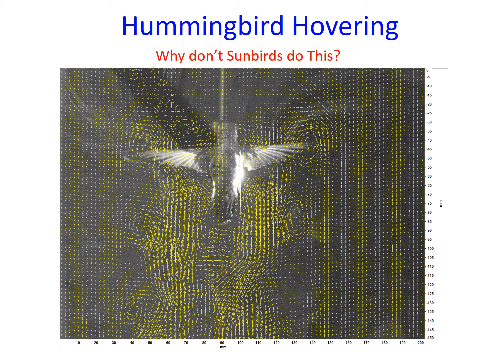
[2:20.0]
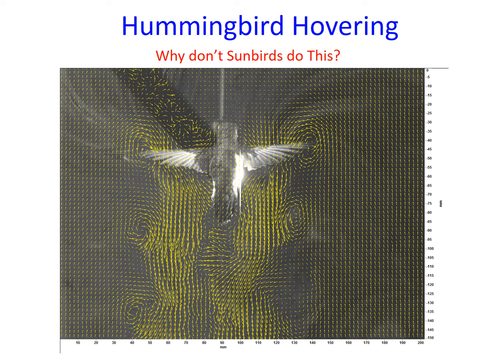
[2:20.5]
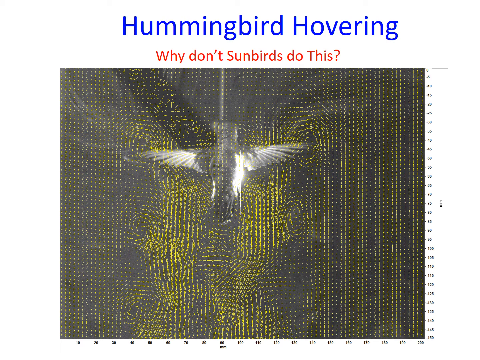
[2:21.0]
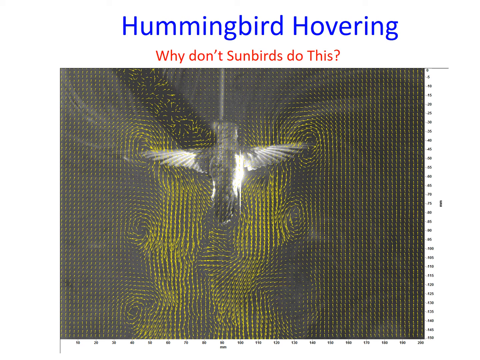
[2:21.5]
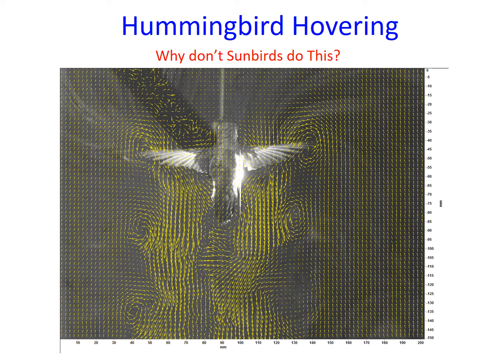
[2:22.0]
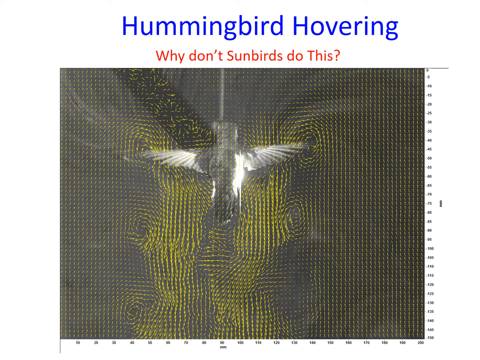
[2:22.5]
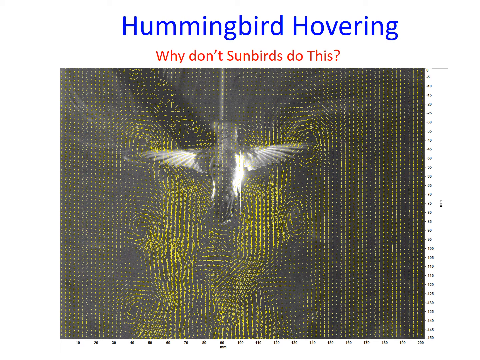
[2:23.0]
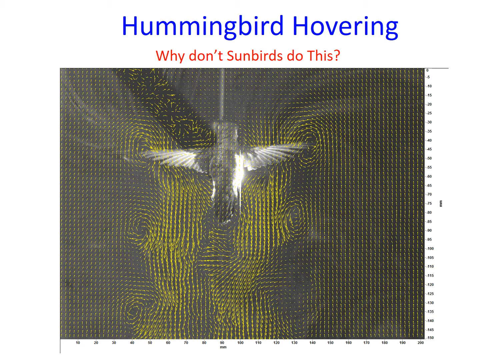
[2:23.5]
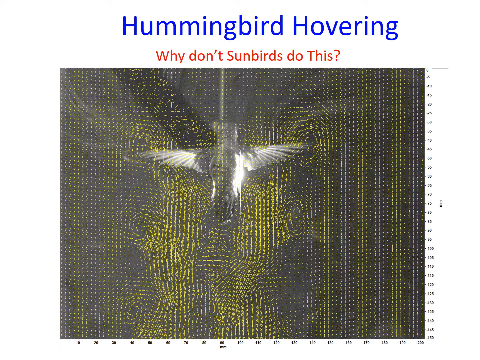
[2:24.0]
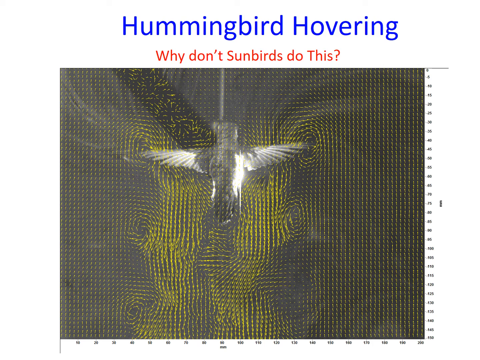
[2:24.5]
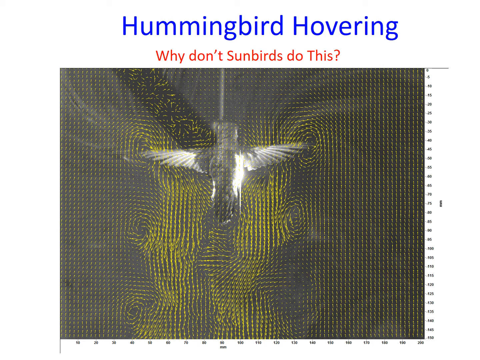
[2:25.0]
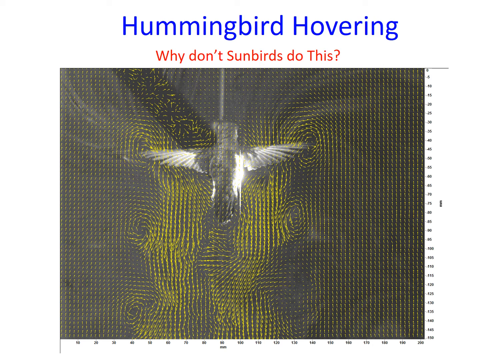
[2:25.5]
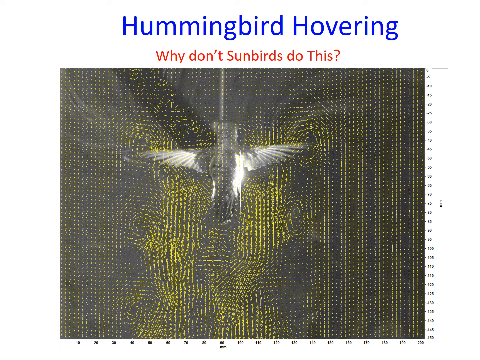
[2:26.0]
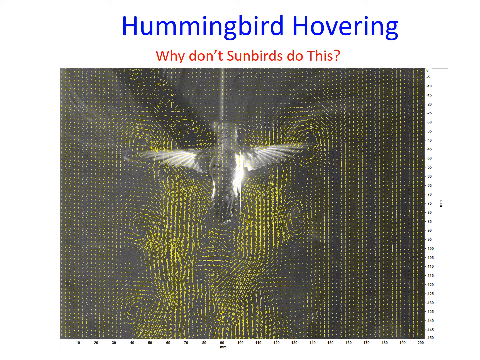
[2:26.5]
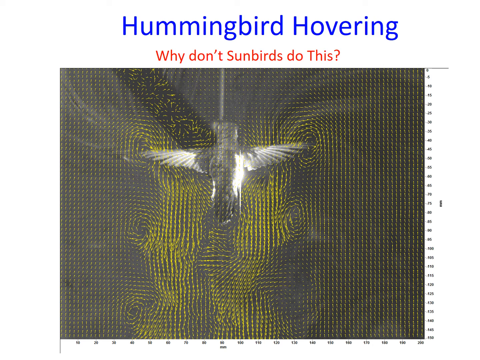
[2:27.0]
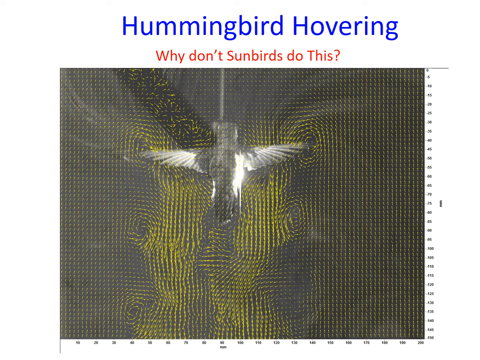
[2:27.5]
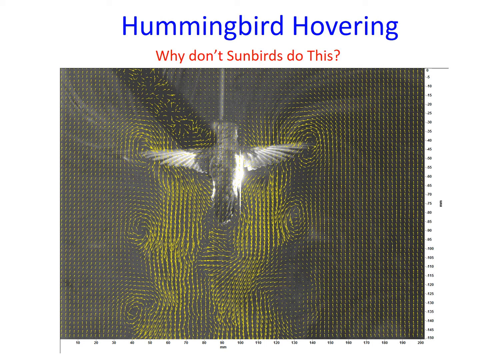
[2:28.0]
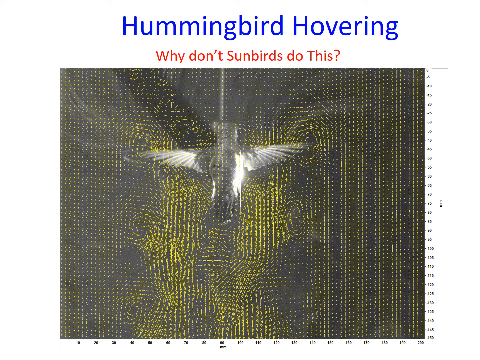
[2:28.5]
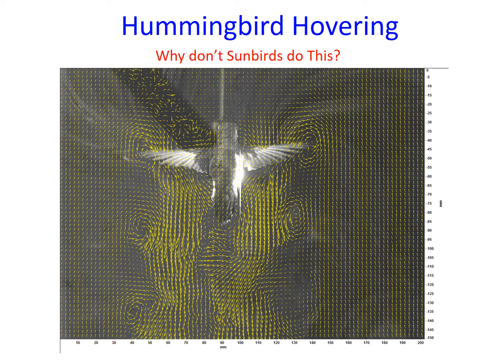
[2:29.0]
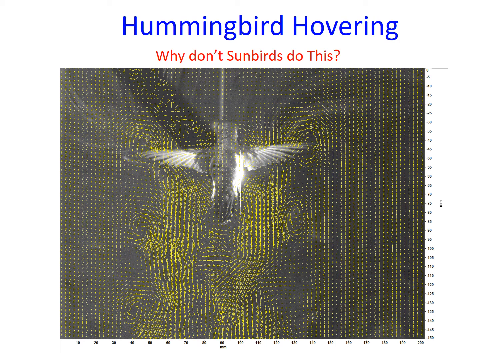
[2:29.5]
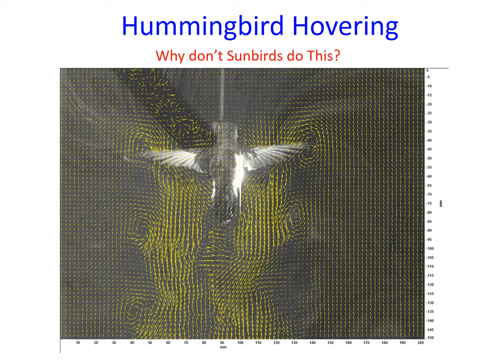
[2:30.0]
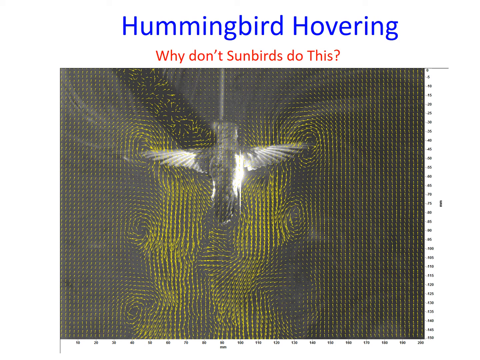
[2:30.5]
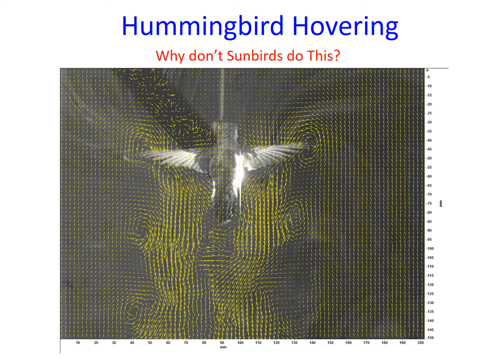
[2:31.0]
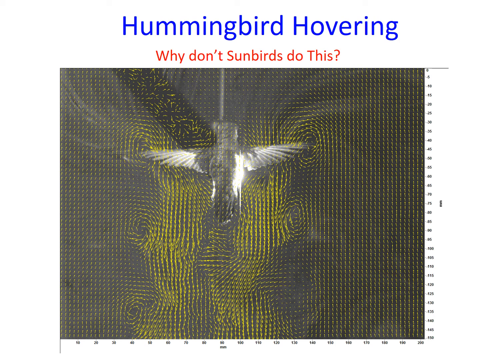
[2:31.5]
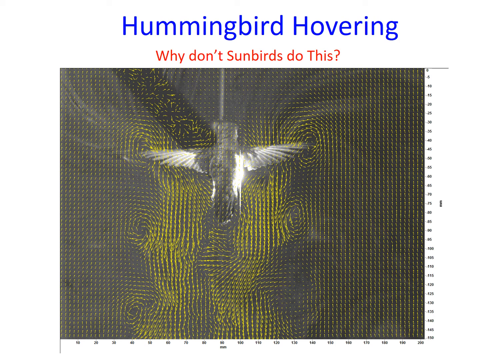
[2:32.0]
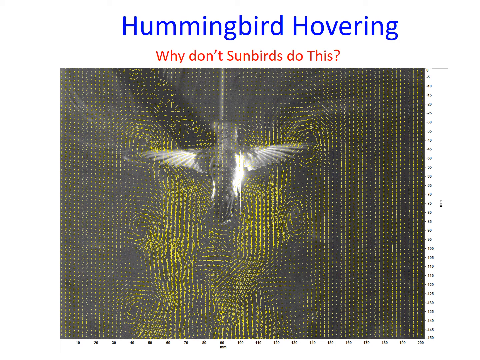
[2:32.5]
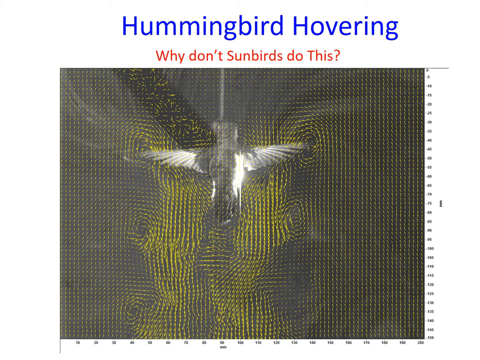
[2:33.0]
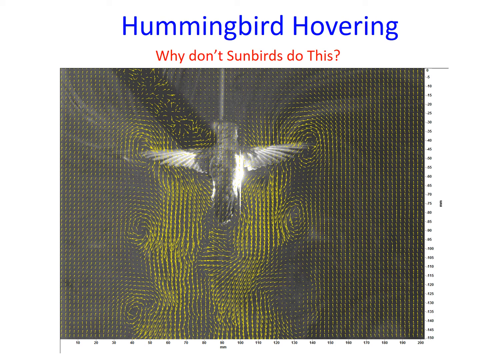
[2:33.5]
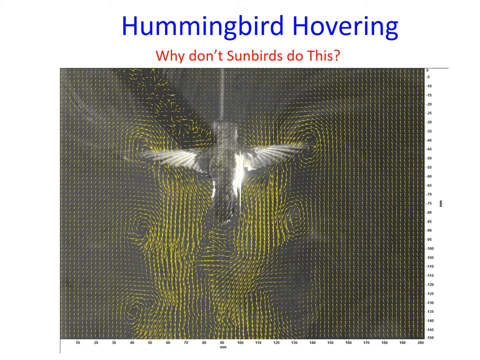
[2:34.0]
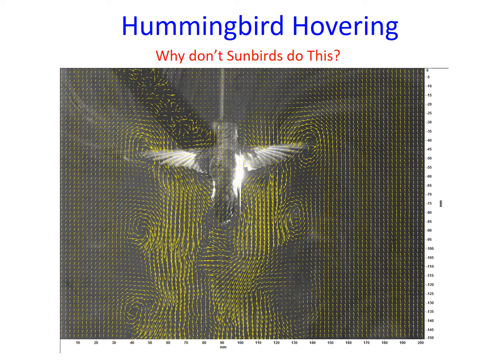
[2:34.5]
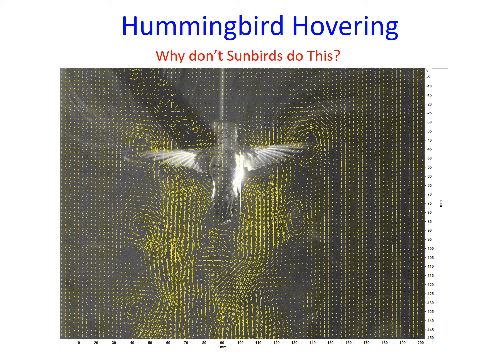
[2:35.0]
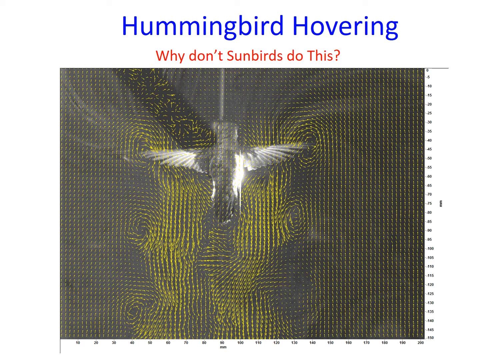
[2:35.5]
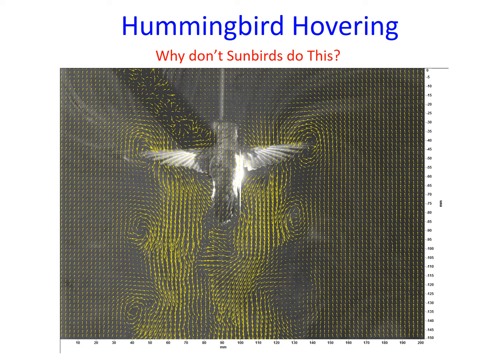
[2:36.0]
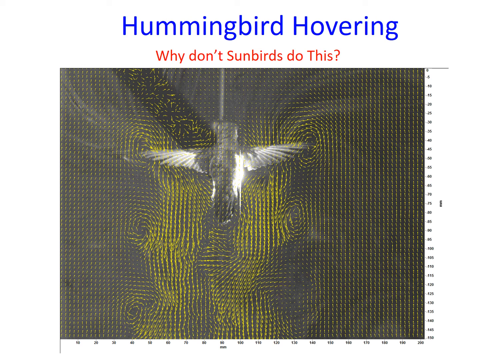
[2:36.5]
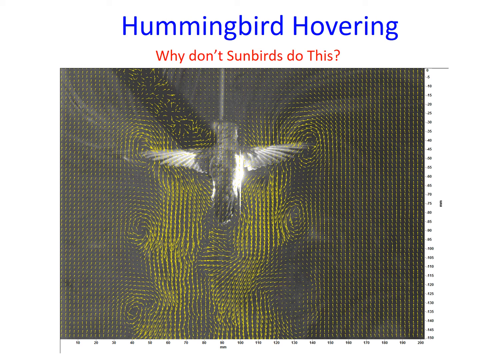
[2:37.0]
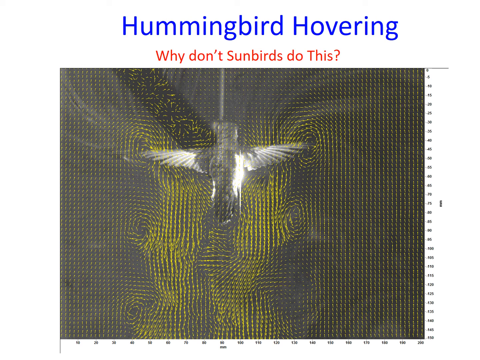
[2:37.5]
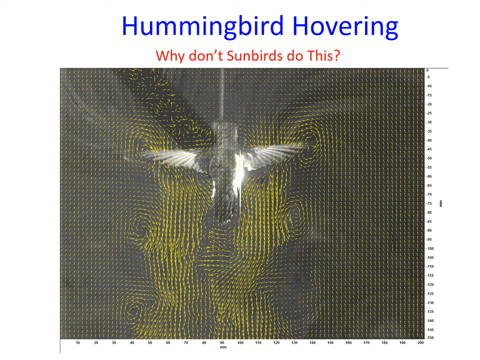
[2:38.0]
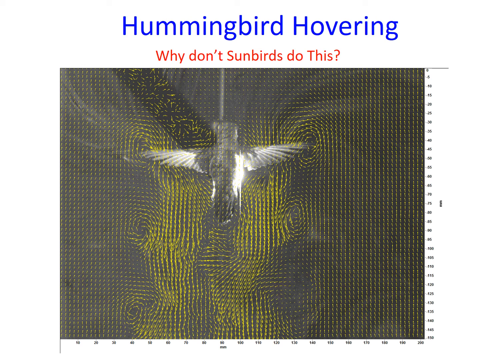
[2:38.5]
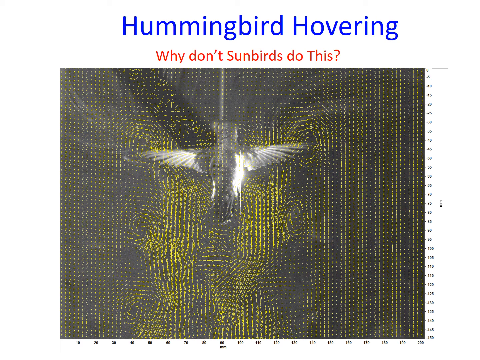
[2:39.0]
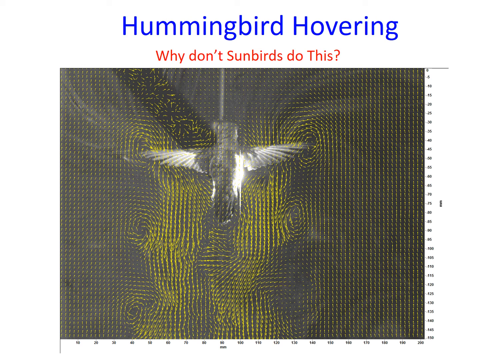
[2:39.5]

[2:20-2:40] A hummingbird hovers, and text reads "why don't sunbirds do this?" Another bird is then shown moving in a particular direction, contrasting how the hummingbird and the sunbird move their wings. The background is not a natural environment but a lab-type setting, with a number of yellow dots on a black background.